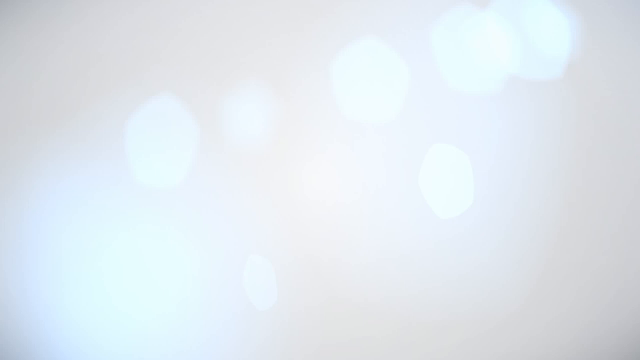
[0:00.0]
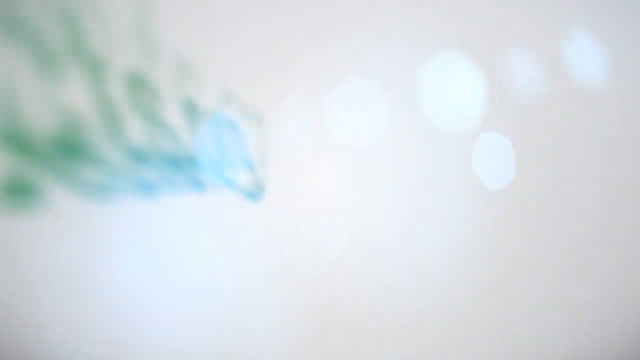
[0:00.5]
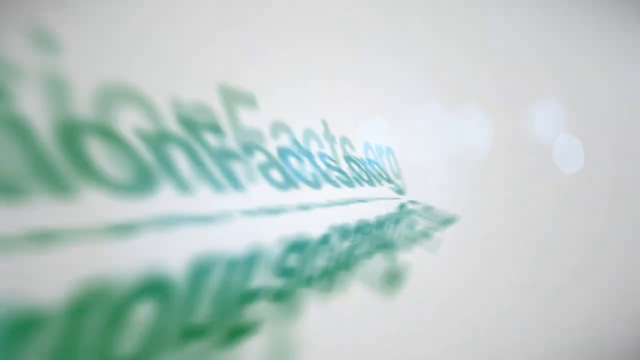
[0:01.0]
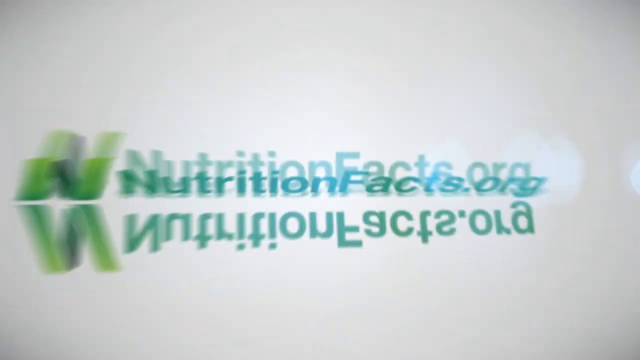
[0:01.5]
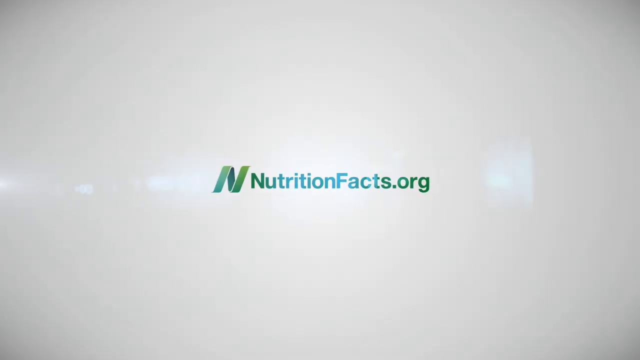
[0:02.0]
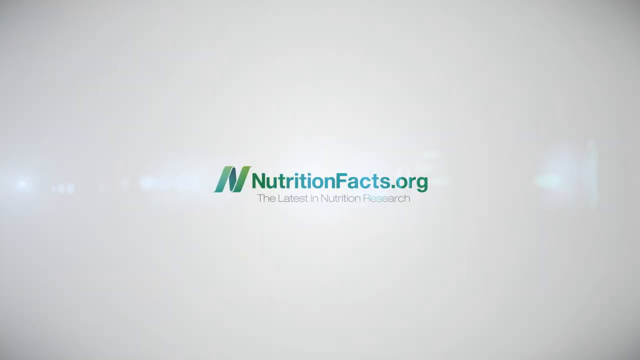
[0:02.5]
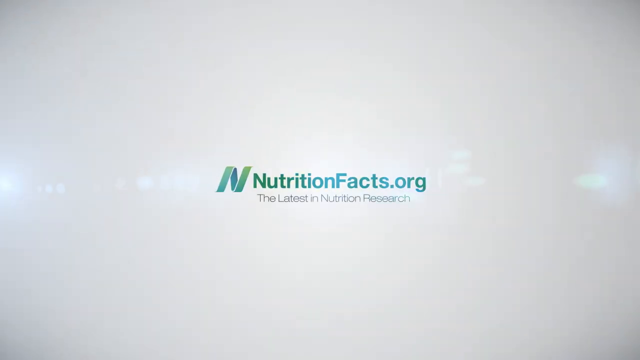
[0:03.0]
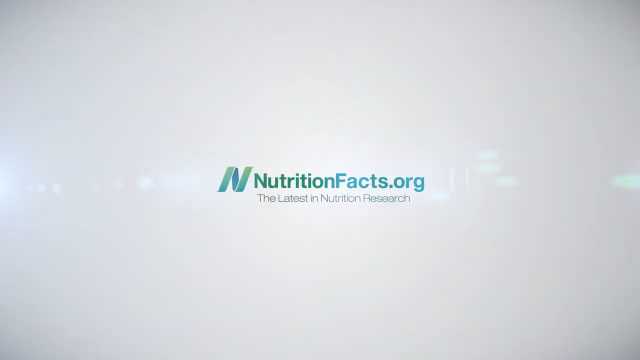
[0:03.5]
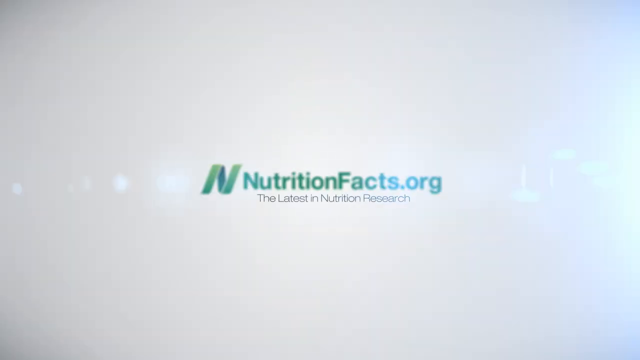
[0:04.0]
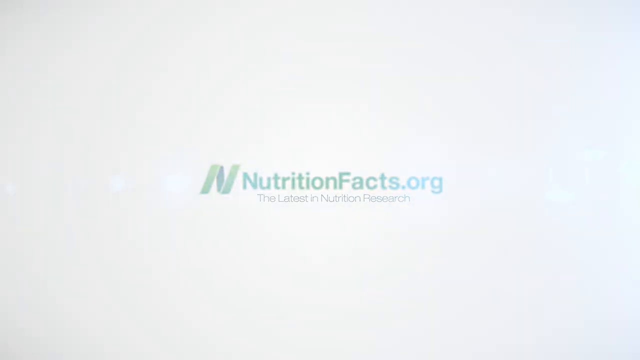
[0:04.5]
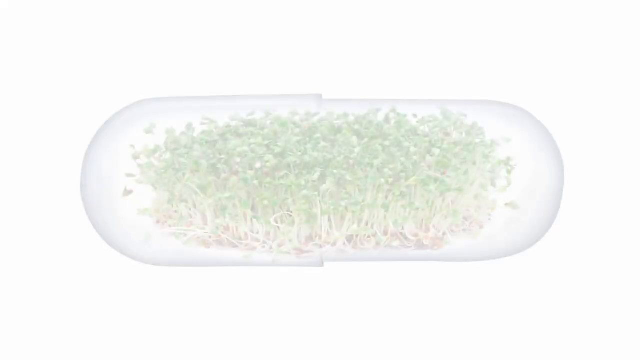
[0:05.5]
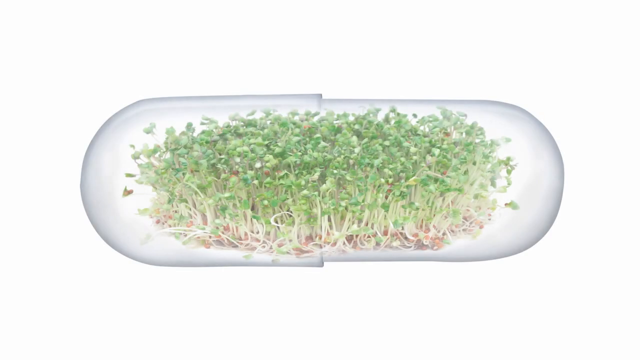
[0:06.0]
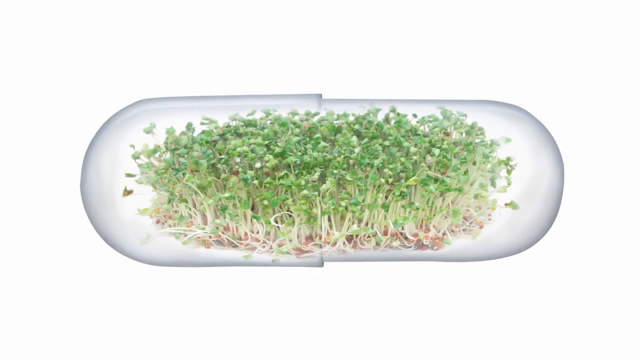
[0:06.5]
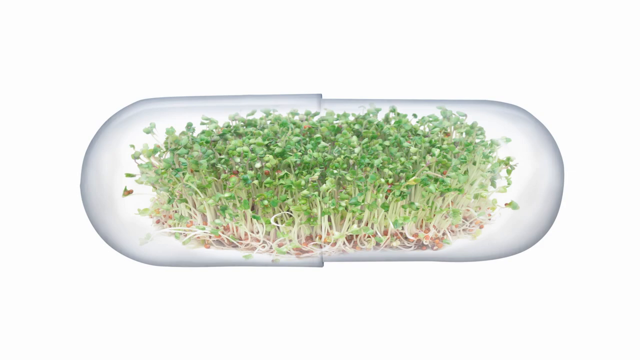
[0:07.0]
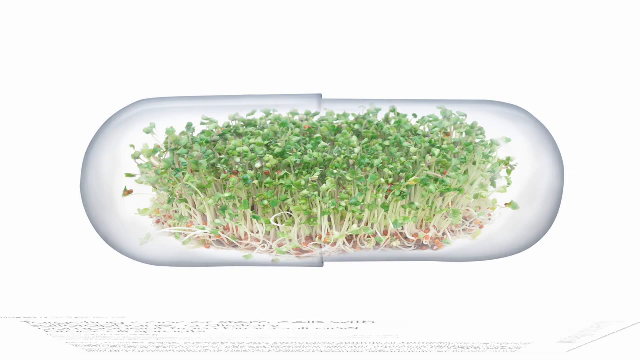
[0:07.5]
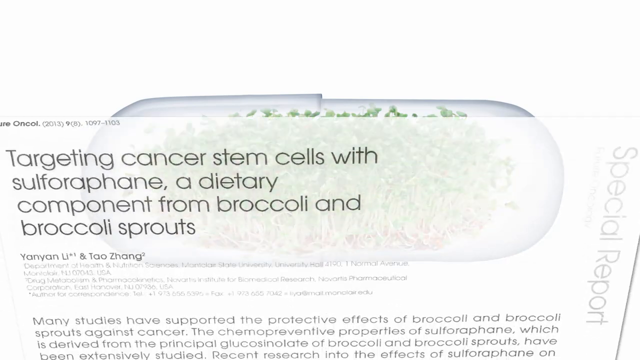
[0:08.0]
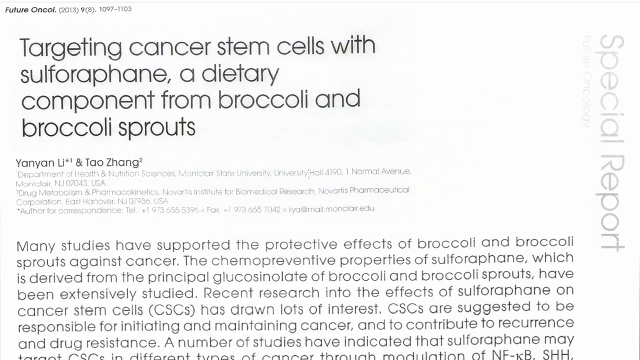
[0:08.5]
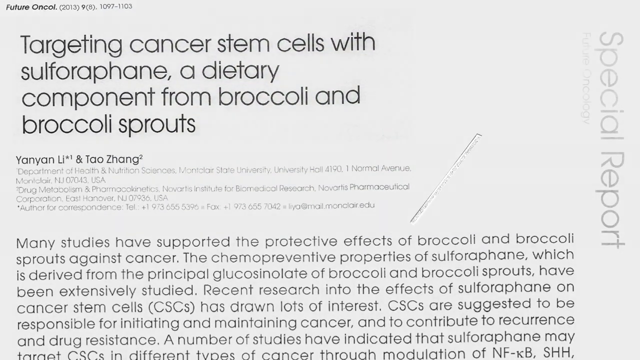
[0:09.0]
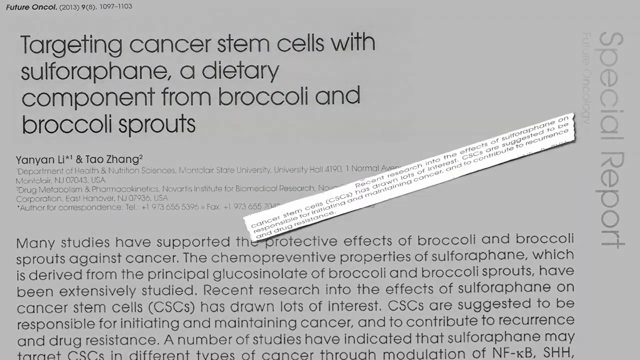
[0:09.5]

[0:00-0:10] The video opens with an animation of a website reading "nutritionfacts.org", with "the latest in nutrition research" underneath and a big N next to it. It then transitions to a picture of what looks to be a couple of stem leaves inside a cylinder-like container. Next comes a screenshot of an article that reads: "Targeting cancer stem cells with sulforaphane, a dietary component from broccoli and broccoli sprouts. Many studies have supported the protective effects of broccoli and broccoli sprouts against cancer. The chemopreventive properties of sulforaphane, which is derived from the principal glucosinolate of broccoli and broccoli sprouts, have been extensively studied. Recent research into the effects of sulforaphane on cancer stem cells, CSCS, has drawn lots of interest. CSCS are suggested to be responsible for initiating and maintaining cancer and to contribute to recurrence and drug resistance. A number of studies have indicated that sulforaphane may target CSCS in different types of cancer".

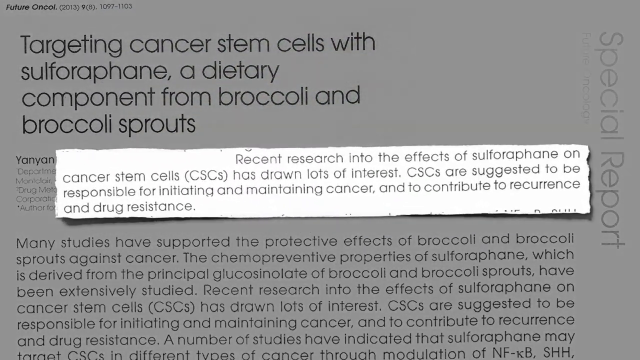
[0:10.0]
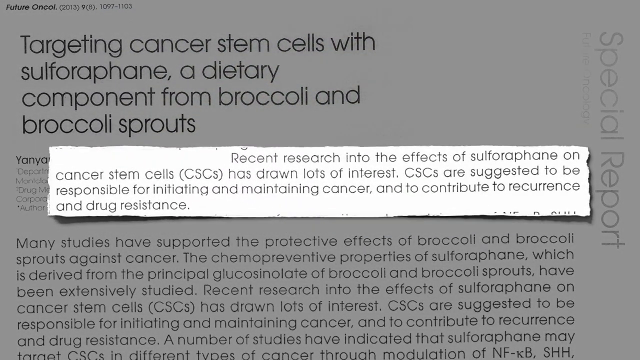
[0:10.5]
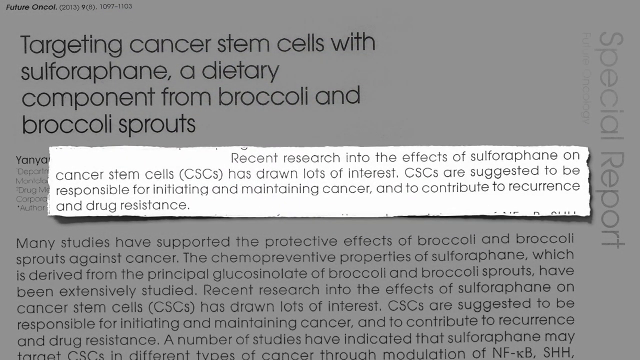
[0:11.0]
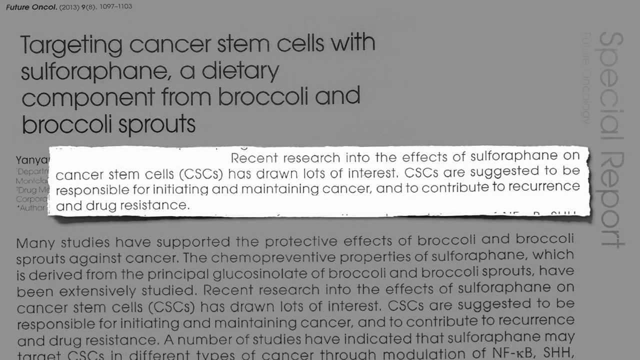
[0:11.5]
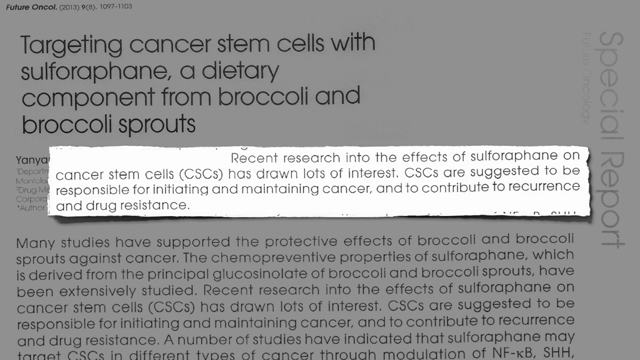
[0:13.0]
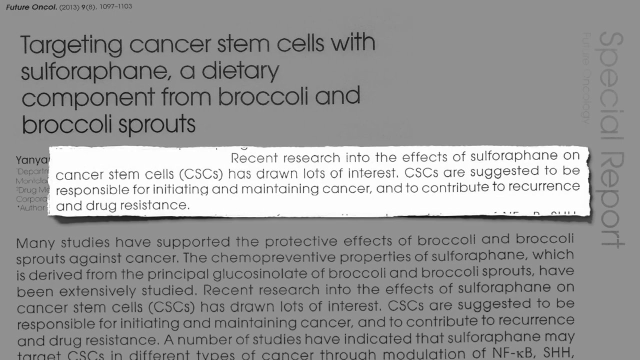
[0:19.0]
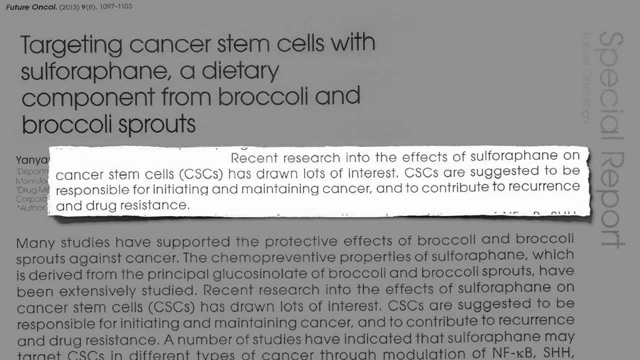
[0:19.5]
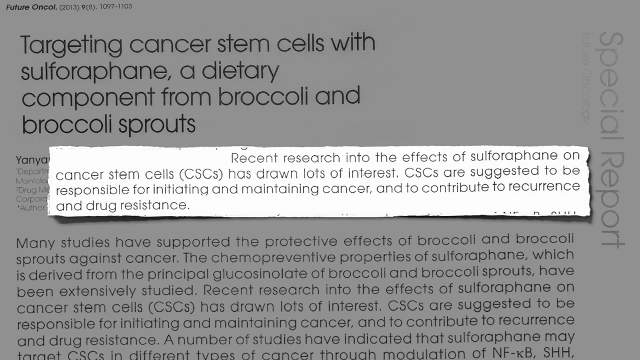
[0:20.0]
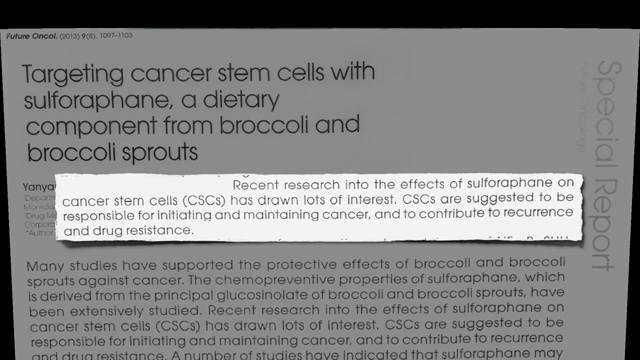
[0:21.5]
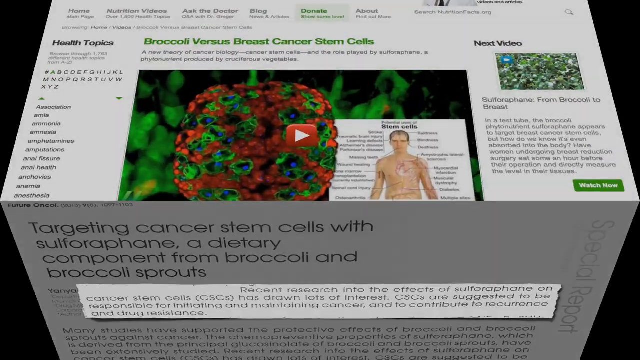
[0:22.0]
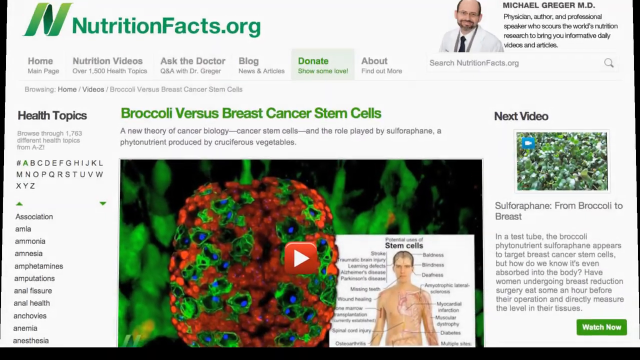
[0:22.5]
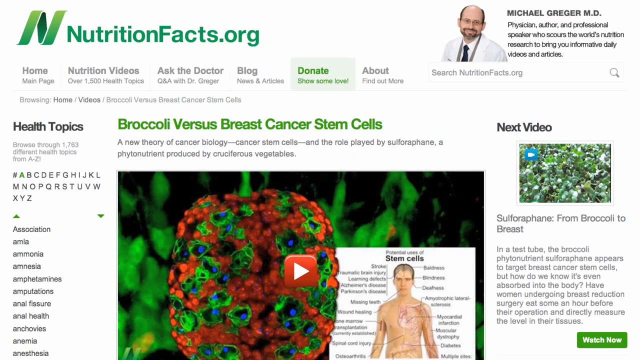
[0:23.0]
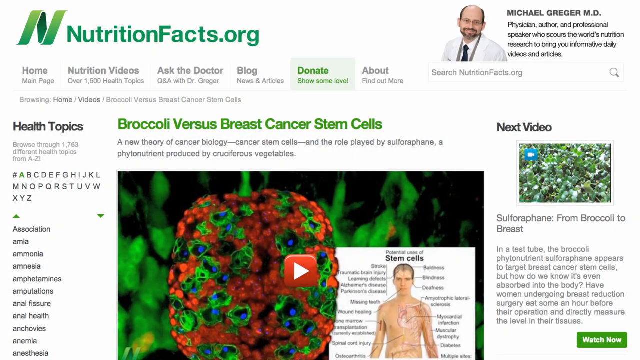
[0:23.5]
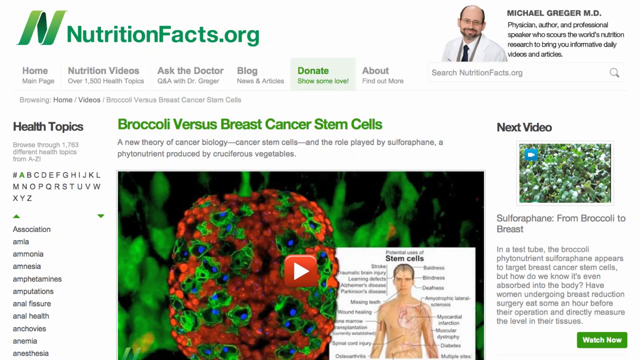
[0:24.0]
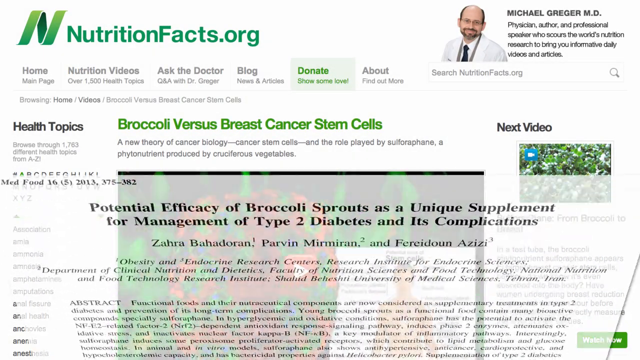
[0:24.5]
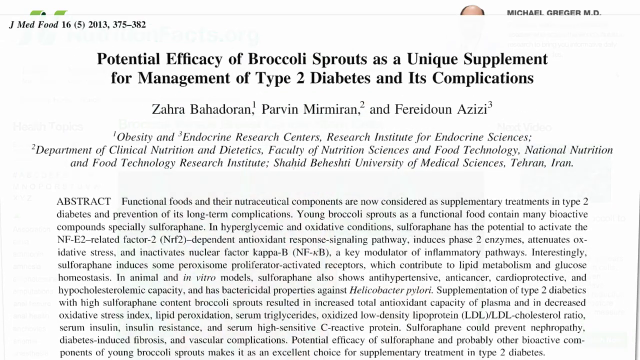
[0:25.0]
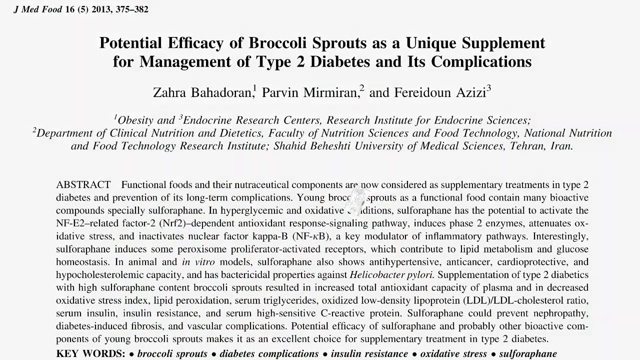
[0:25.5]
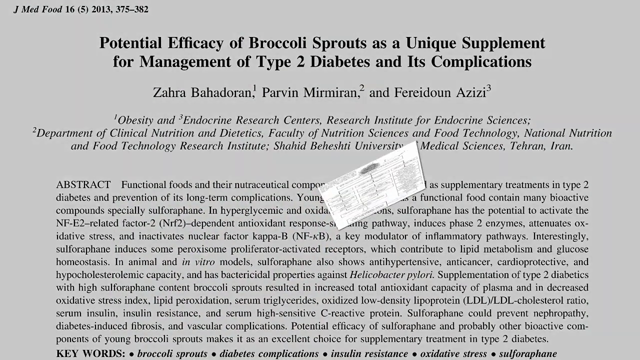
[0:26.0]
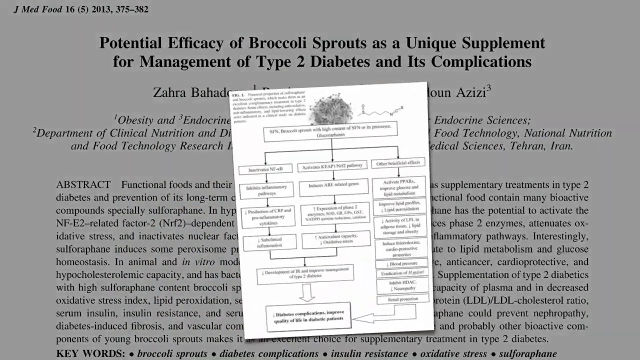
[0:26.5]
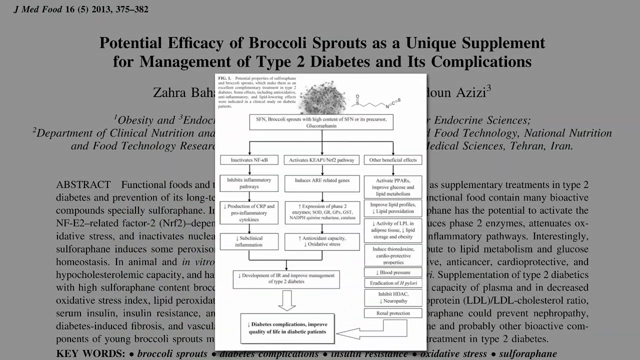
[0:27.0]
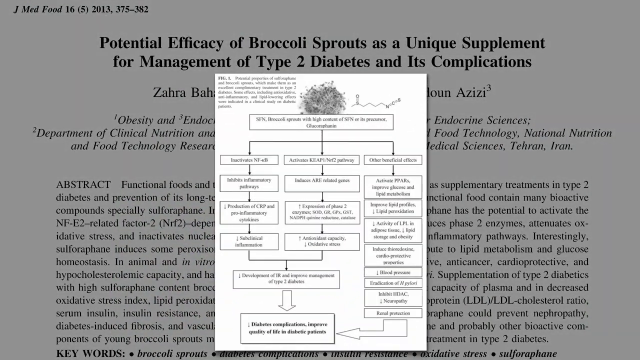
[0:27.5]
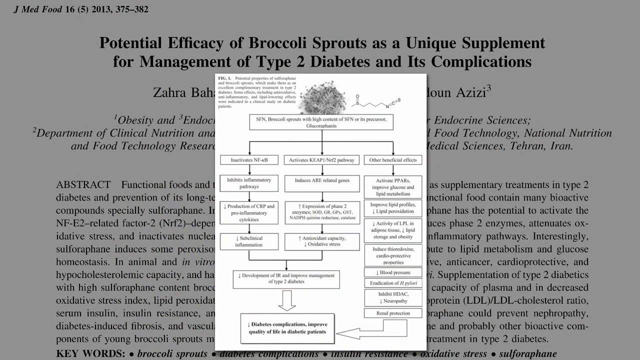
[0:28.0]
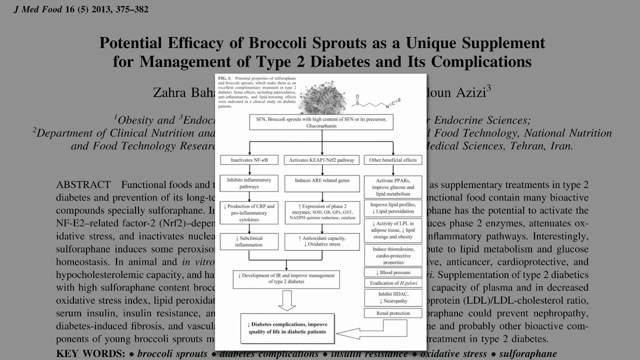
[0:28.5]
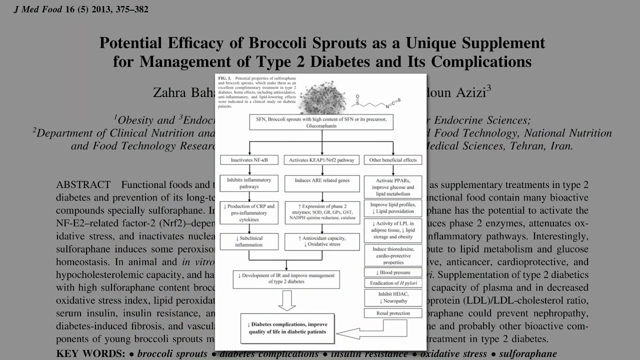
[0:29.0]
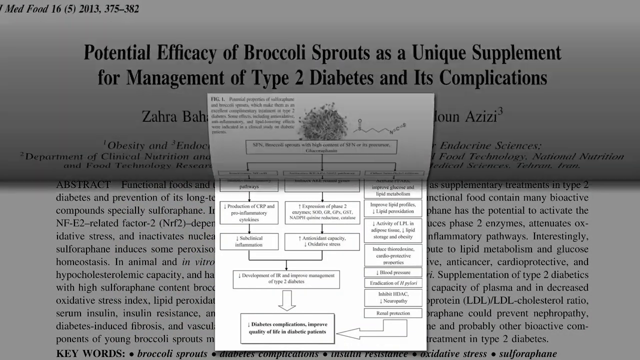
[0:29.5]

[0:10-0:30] The same article screenshot continues, and a small excerpt appears in the middle of the screen reading "recent research into the effects of sulforaphane on cancer stem cells, CSCS, has drawn lots of interest. CSCS are suggested to be responsible for initiating and maintaining cancer and to contribute to recurrence and drug resistance." The video then transitions to a screenshot of a website, with "nutritionfacts.org" in the upper left-hand corner, the same website shown at the beginning. On the right is a picture of a bald man wearing eyeglasses, who looks to be white Caucasian, in a doctor-type suit. Next to him the text reads "Michael Greger, MD, physician, author, and professional speaker who scours the world's nutrition research to bring you informative daily videos and articles." The video goes on to show more of the website's content, such as a video that can be played and excerpts of different articles.